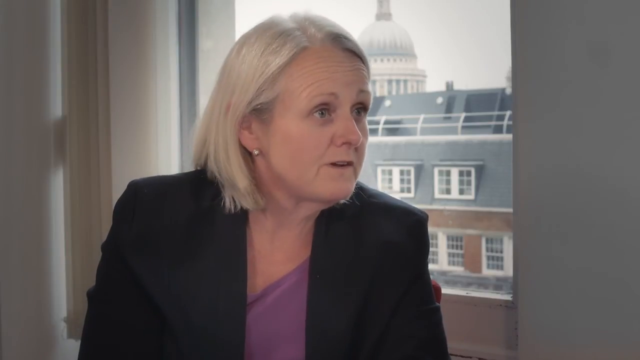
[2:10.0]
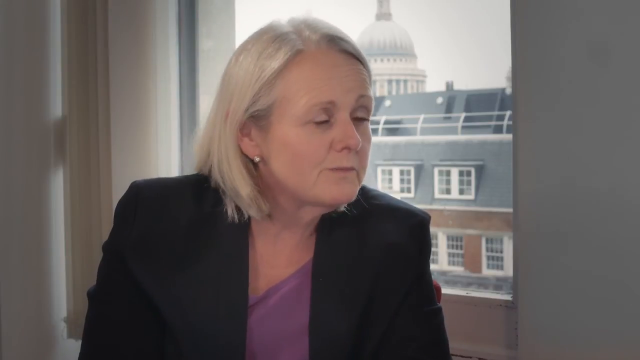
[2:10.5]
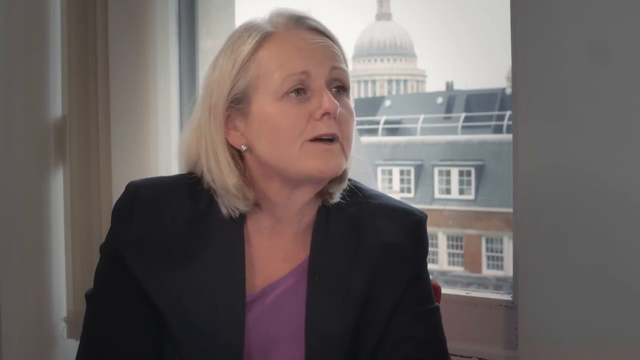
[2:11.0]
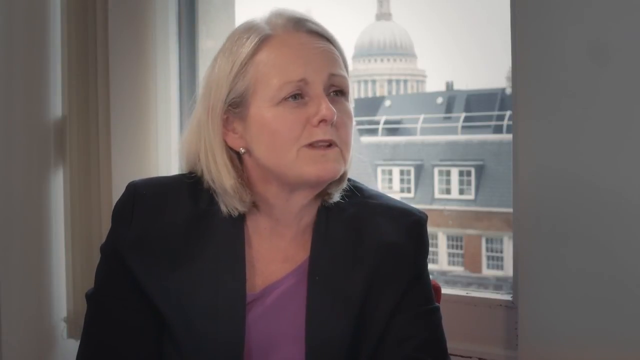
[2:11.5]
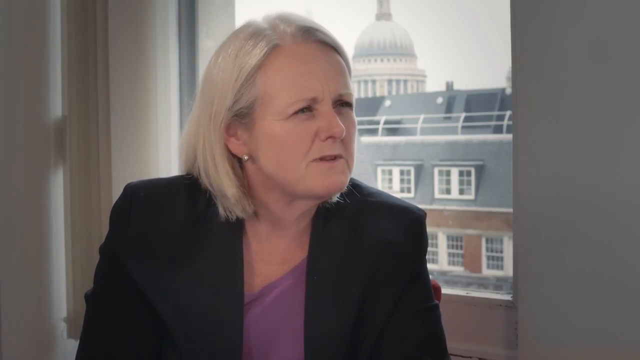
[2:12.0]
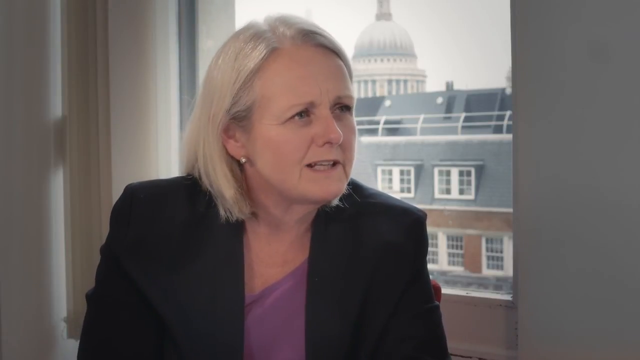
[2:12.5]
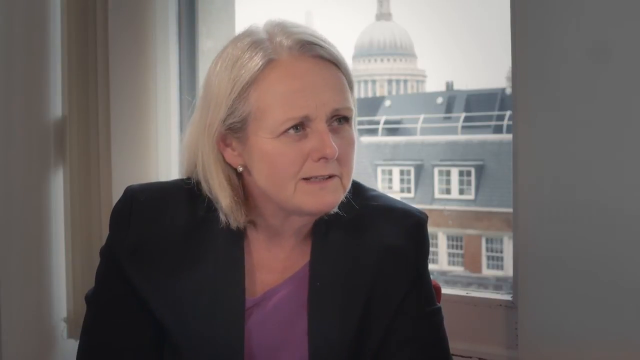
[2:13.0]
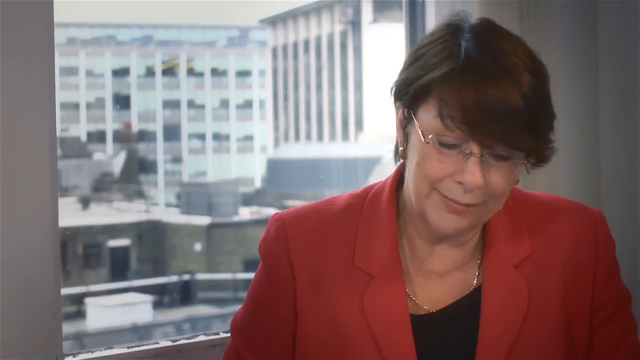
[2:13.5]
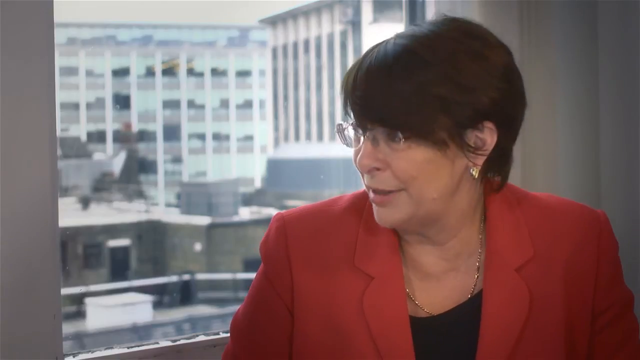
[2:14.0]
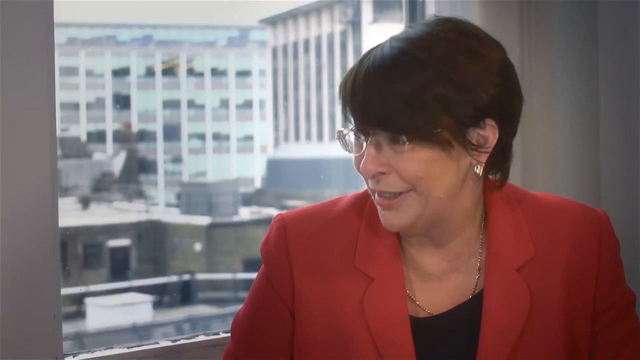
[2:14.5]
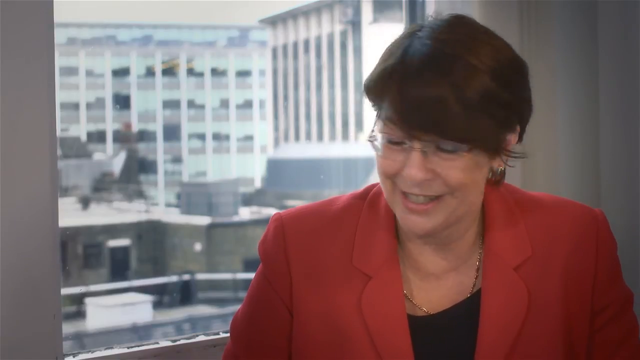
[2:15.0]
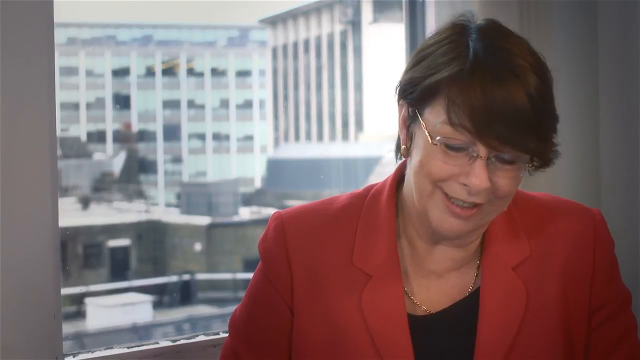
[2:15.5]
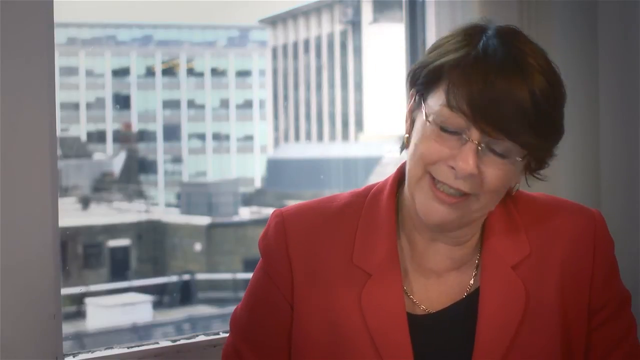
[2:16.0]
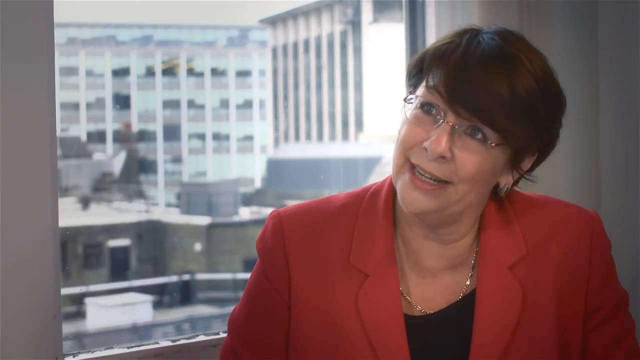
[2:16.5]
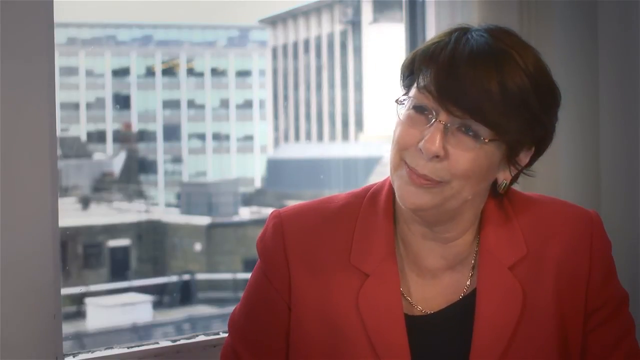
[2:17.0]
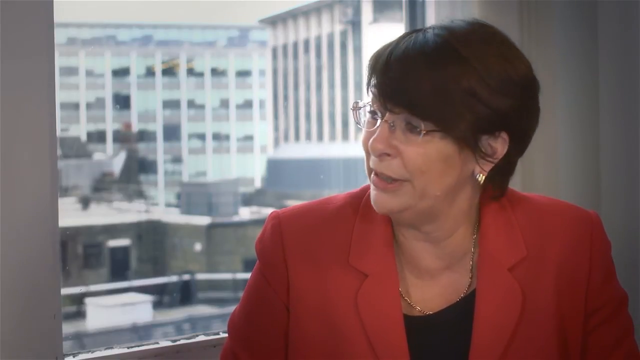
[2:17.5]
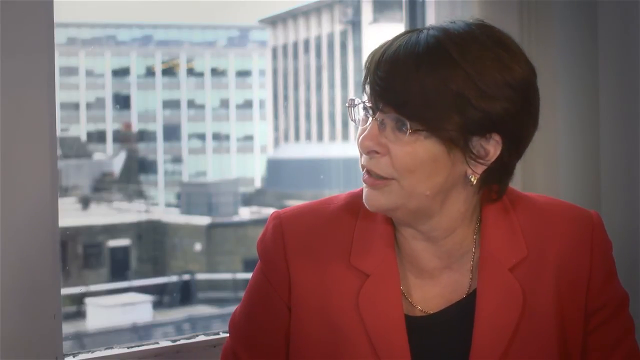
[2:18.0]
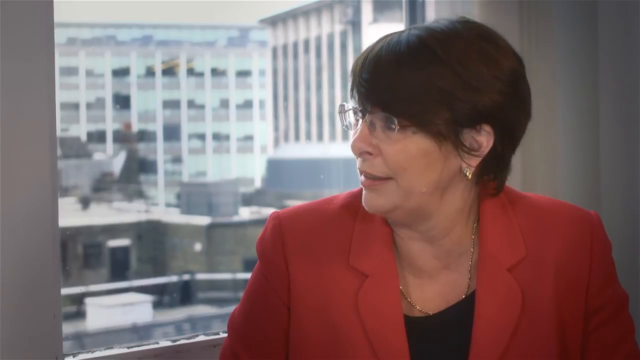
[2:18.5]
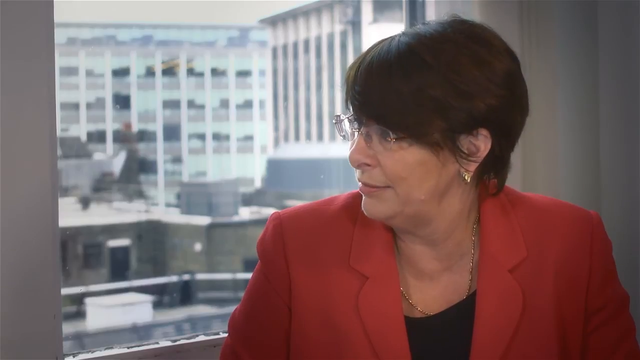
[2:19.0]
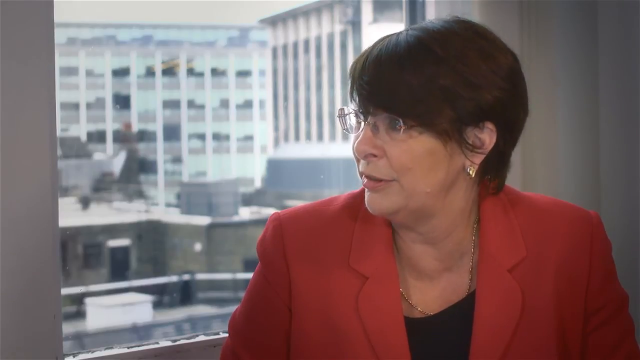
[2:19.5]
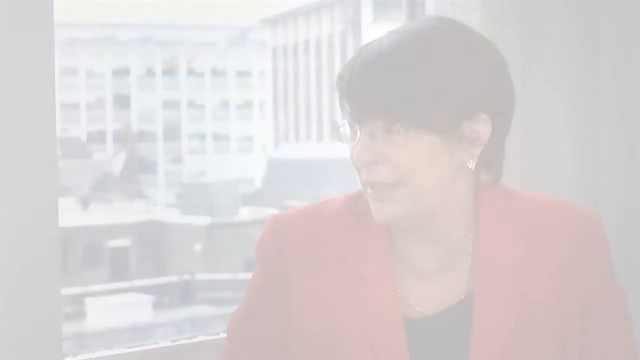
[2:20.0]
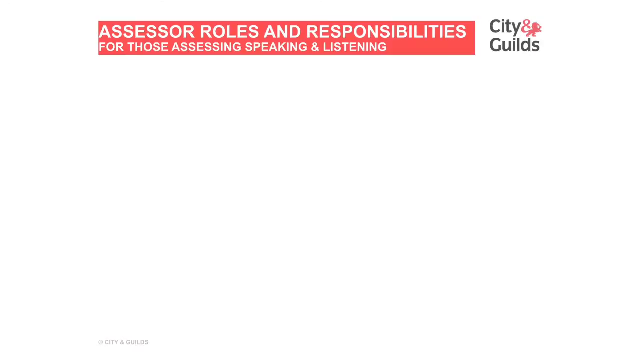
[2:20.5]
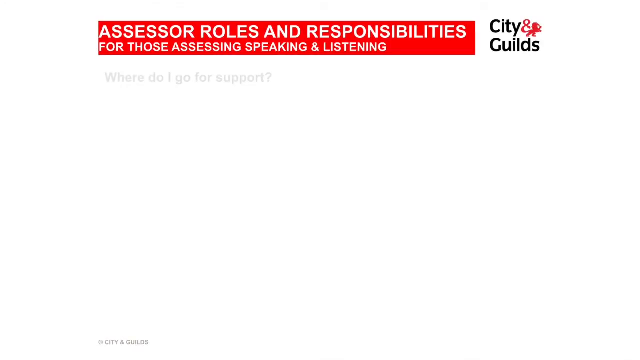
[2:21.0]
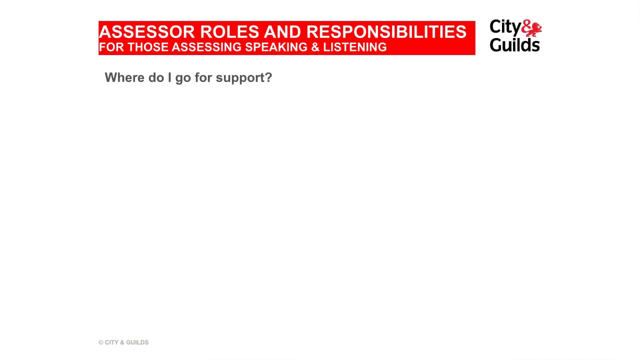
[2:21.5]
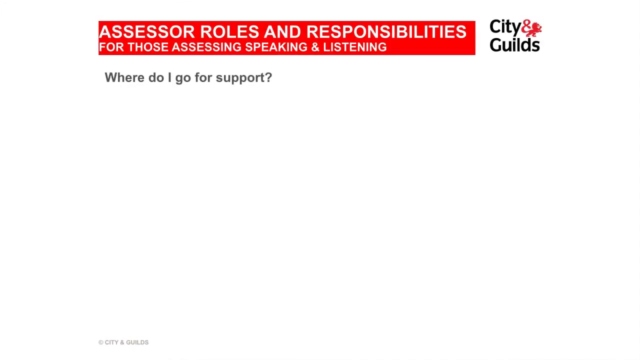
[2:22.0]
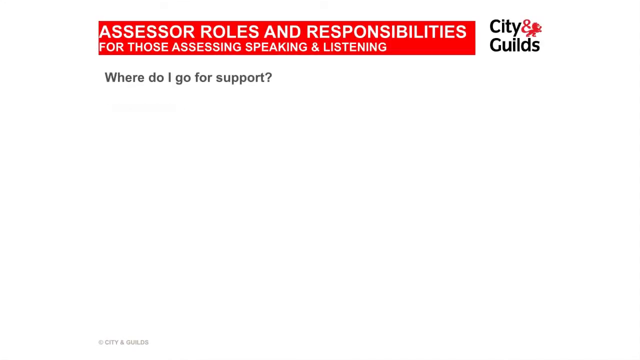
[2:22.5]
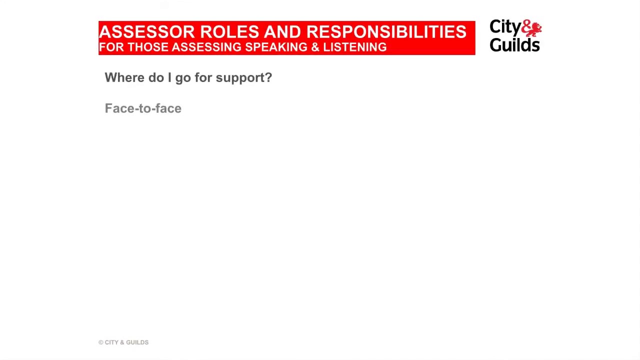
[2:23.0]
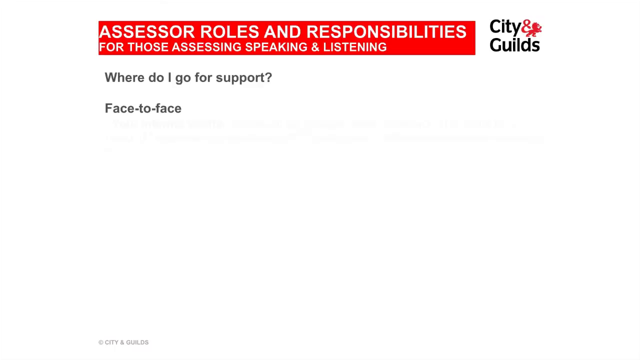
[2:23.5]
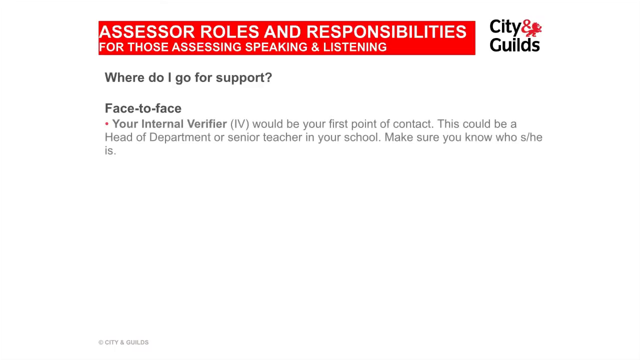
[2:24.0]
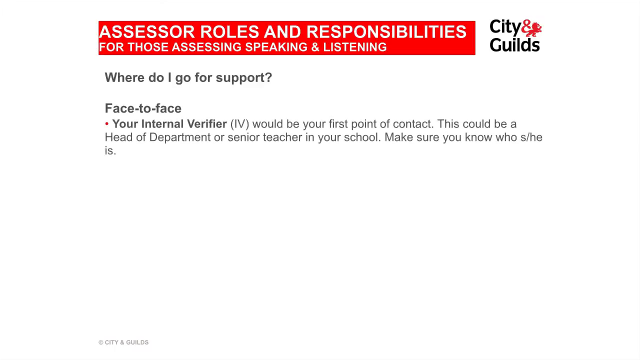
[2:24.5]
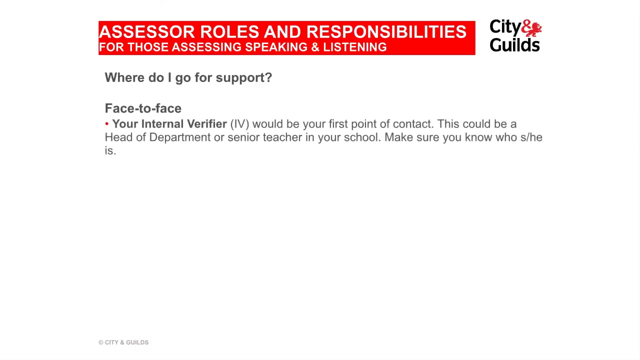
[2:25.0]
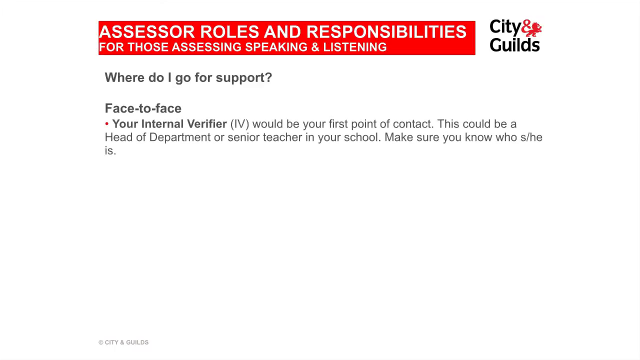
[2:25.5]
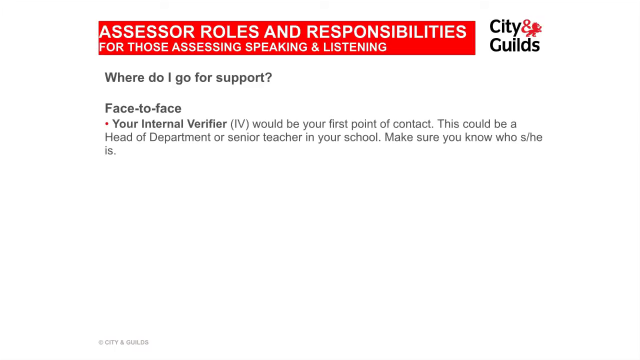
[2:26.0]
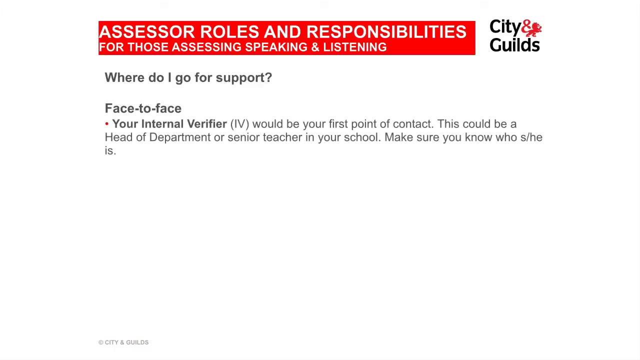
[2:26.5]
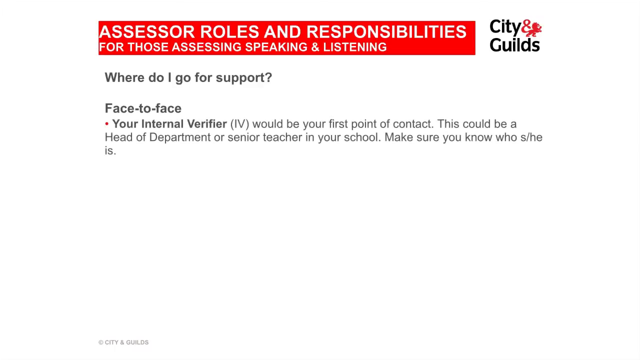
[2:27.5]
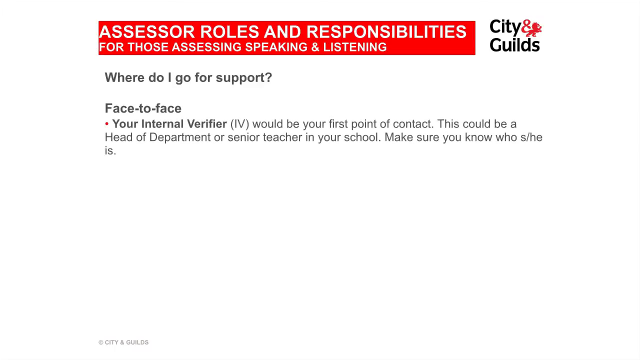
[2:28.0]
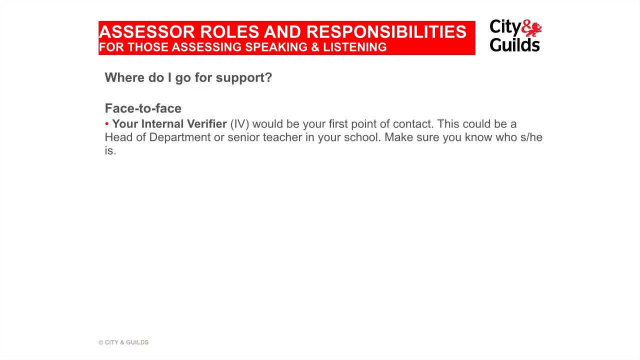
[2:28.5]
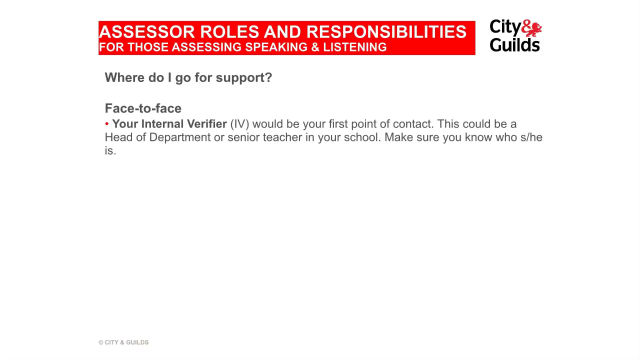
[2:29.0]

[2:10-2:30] The conversation continues between the blonde-haired woman in a black blazer with a purple shirt underneath, sitting in front of a window with a kind of government building in the background, and the brown-haired woman in a red blazer with a black shirt, who wears glasses, gold earrings and a gold necklace around her neck. She is also sitting in front of a window, which has more of an industrial look. The camera goes back and forth between the two of them as they speak. The video then transitions to a PowerPoint slide titled "assessor roles and responsibilities" outlining the roles and responsibilities of the assessor. It says "where do I go for support?" and states that your internal verifier and your external verifier will provide you support during the interview phase.